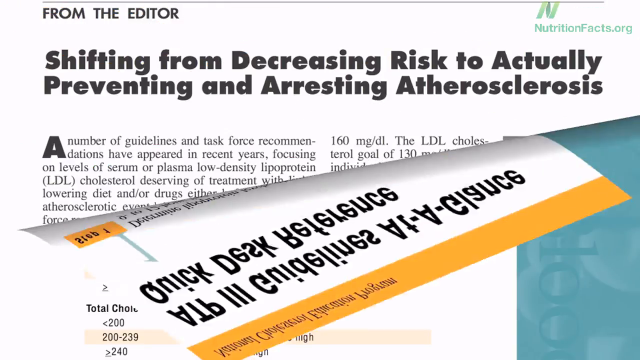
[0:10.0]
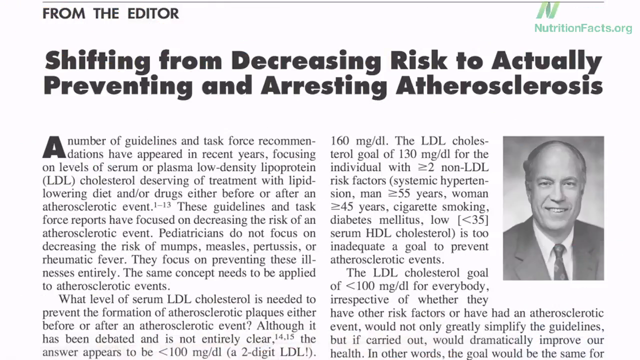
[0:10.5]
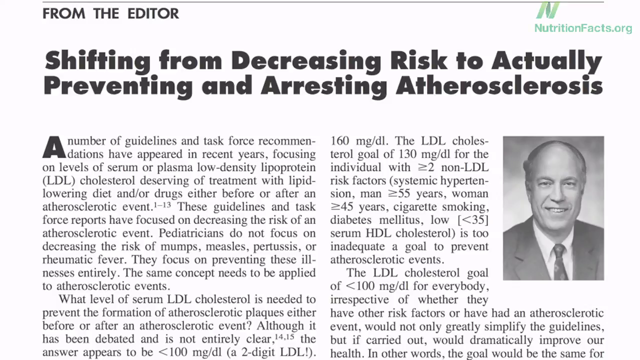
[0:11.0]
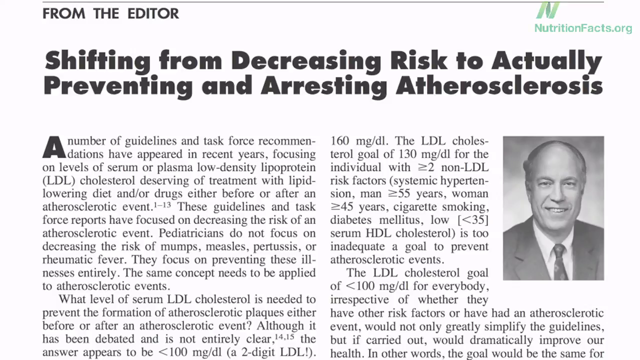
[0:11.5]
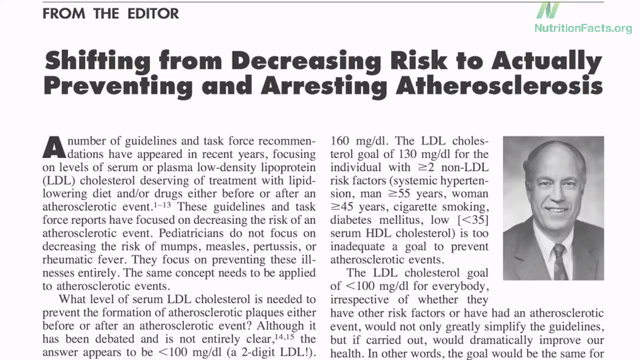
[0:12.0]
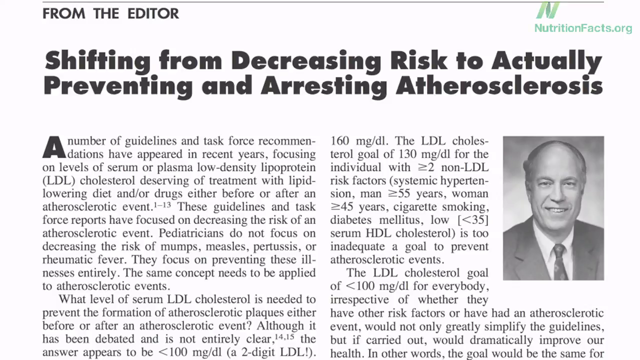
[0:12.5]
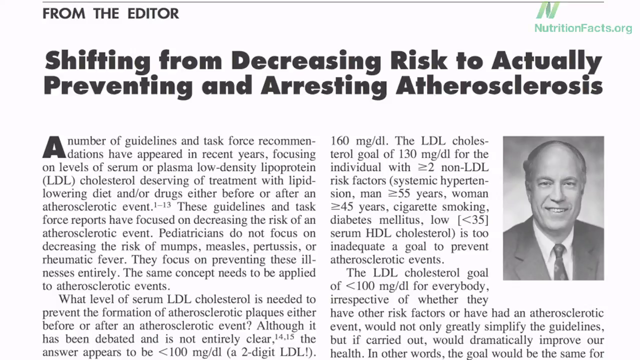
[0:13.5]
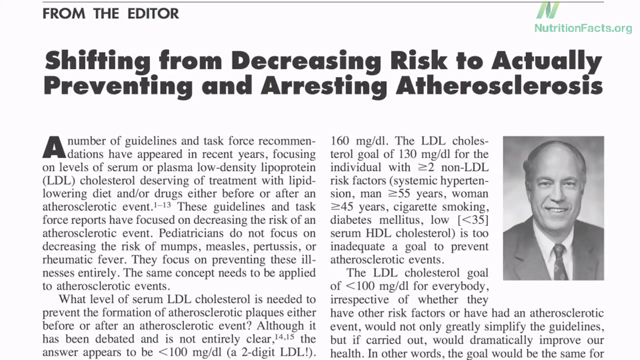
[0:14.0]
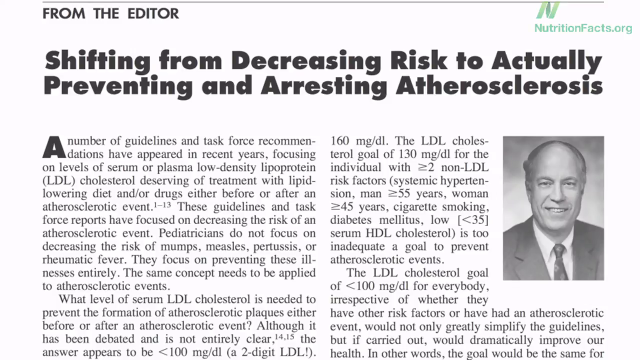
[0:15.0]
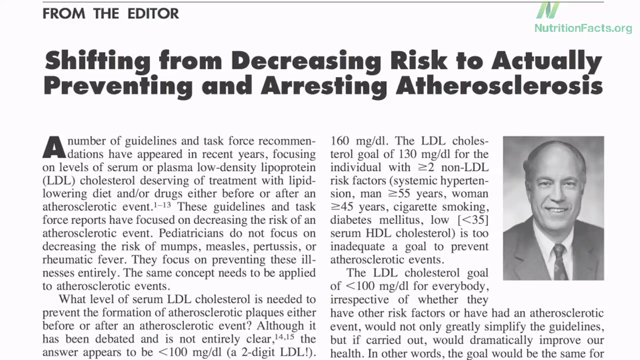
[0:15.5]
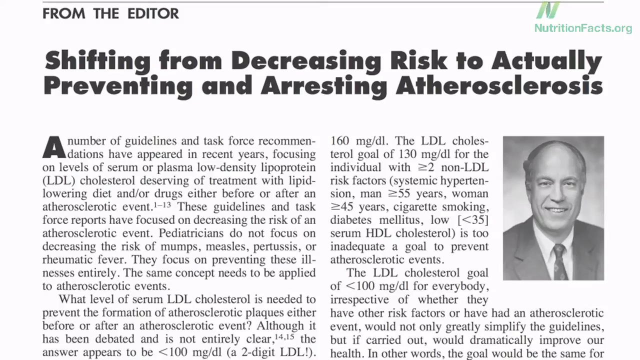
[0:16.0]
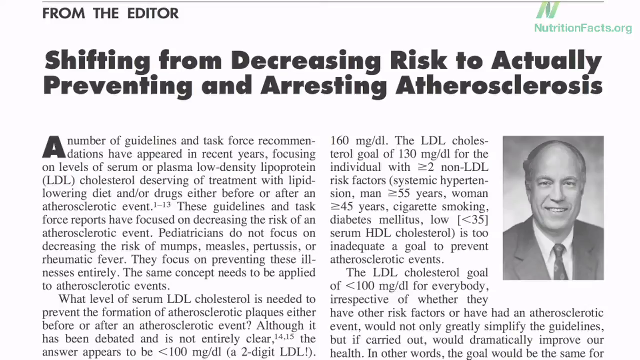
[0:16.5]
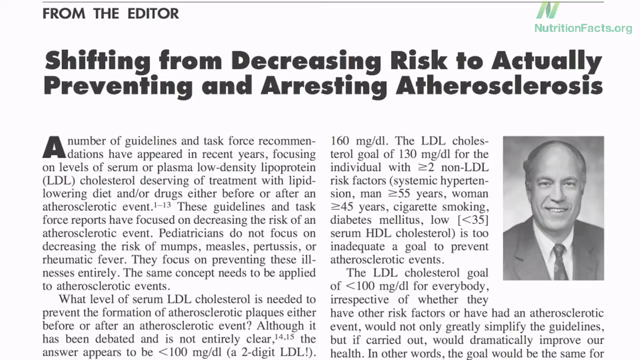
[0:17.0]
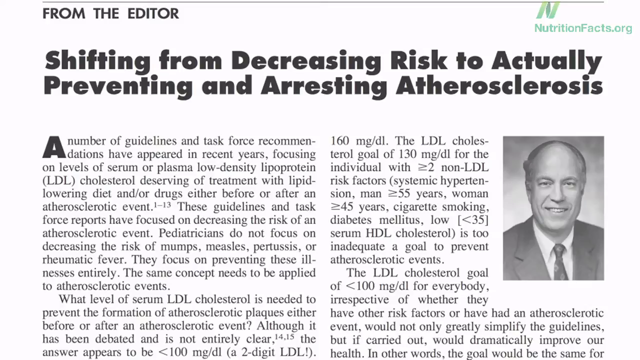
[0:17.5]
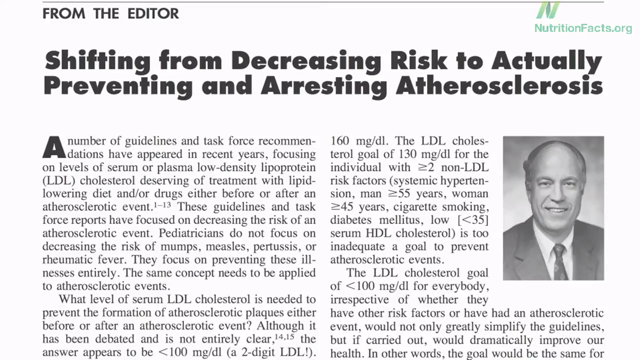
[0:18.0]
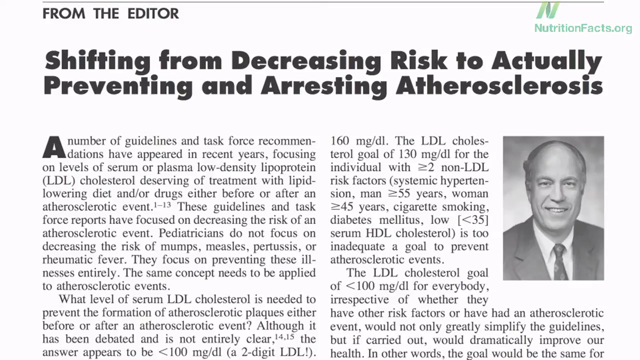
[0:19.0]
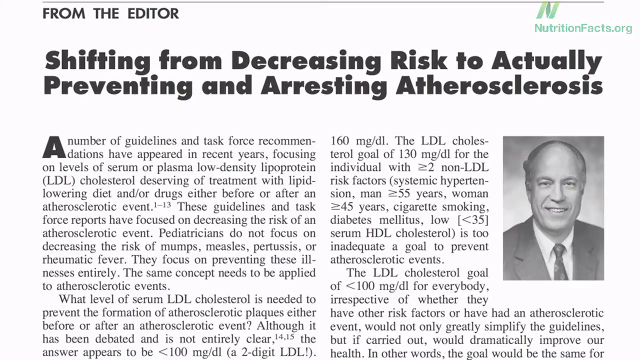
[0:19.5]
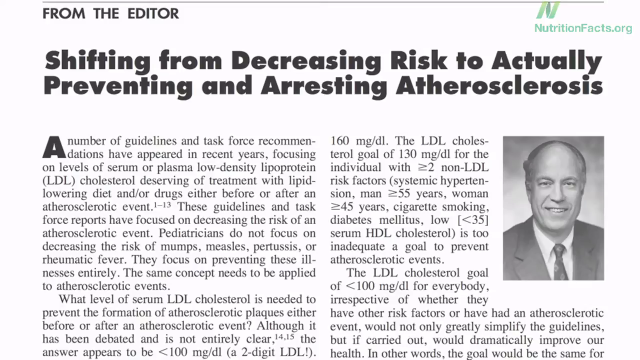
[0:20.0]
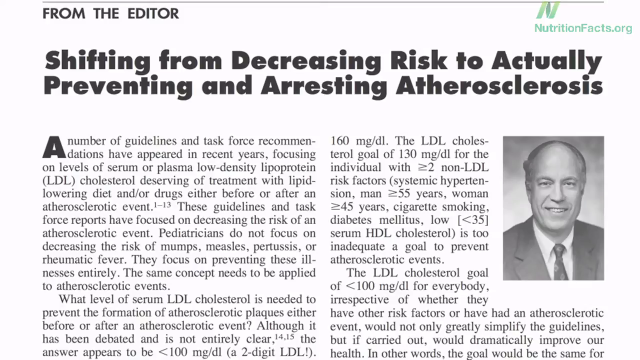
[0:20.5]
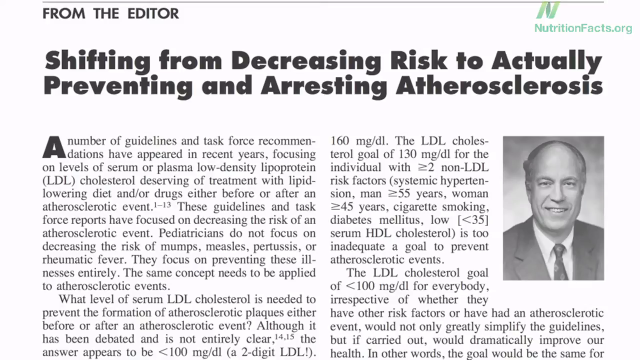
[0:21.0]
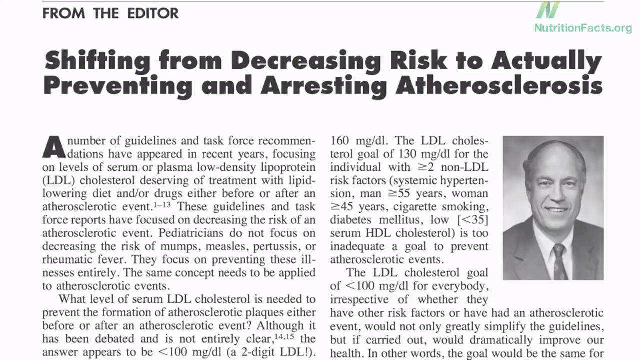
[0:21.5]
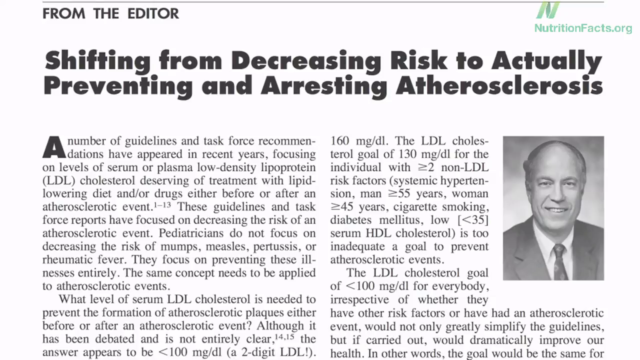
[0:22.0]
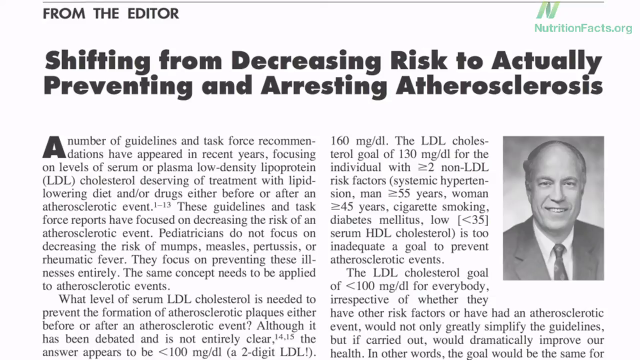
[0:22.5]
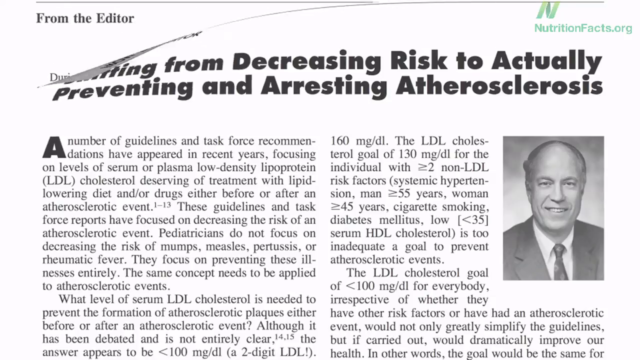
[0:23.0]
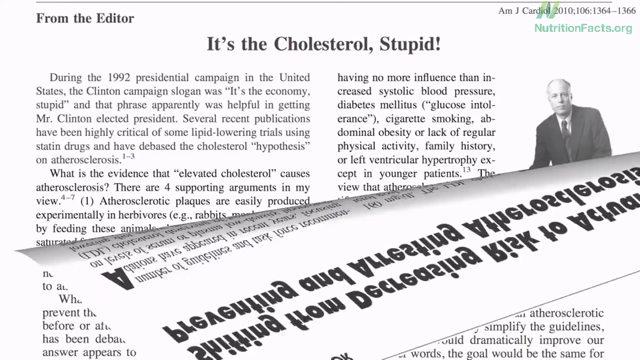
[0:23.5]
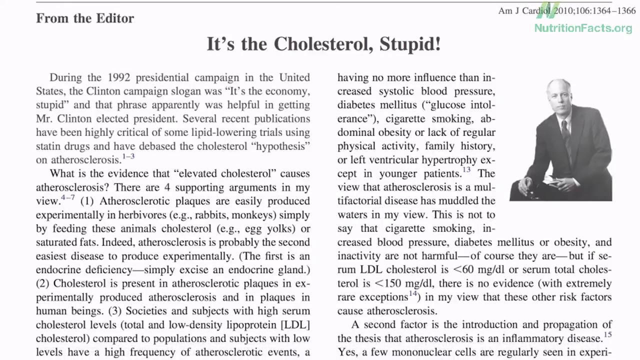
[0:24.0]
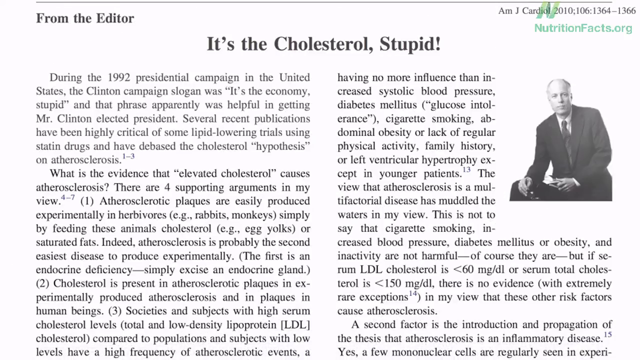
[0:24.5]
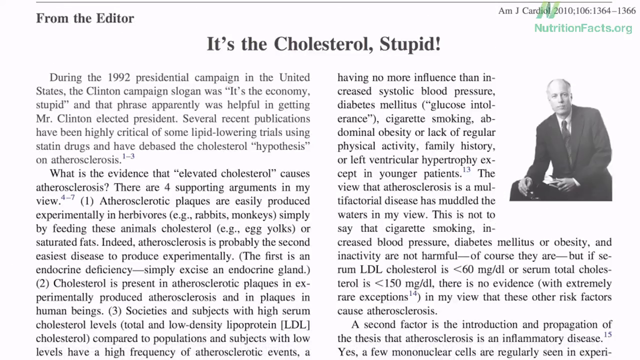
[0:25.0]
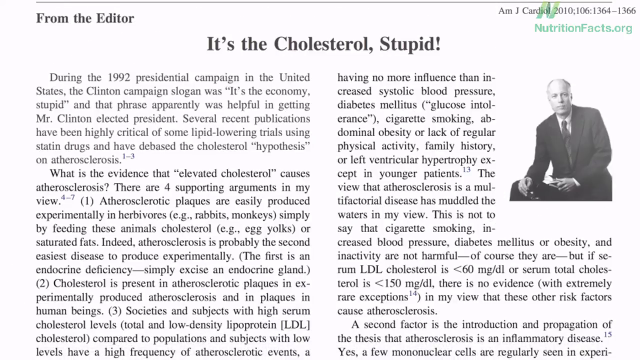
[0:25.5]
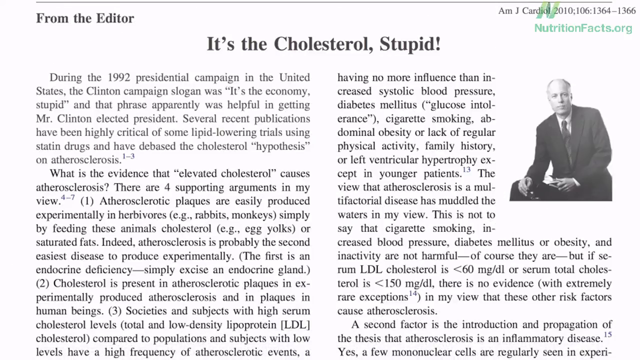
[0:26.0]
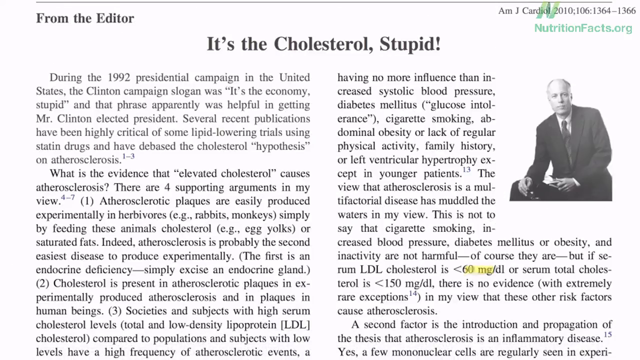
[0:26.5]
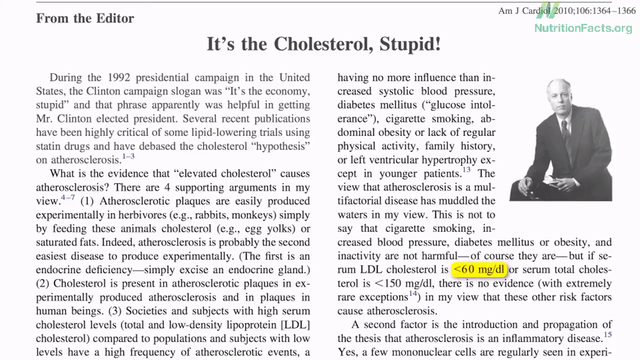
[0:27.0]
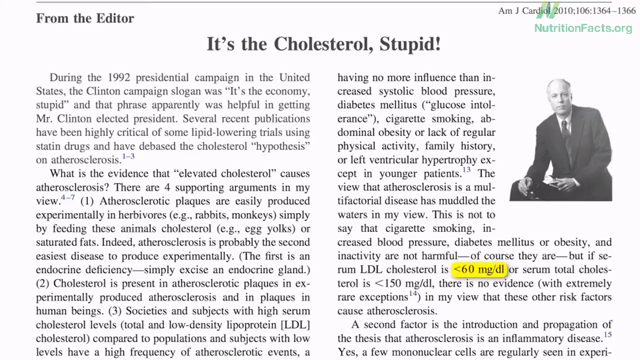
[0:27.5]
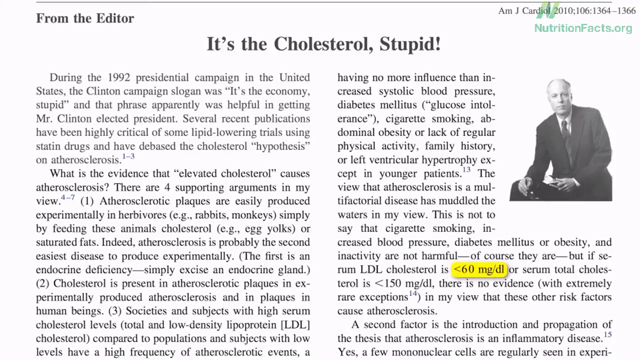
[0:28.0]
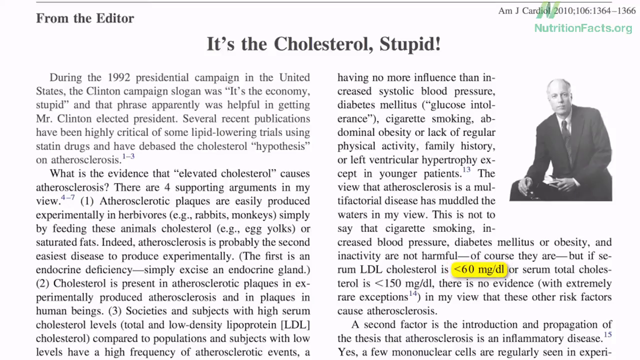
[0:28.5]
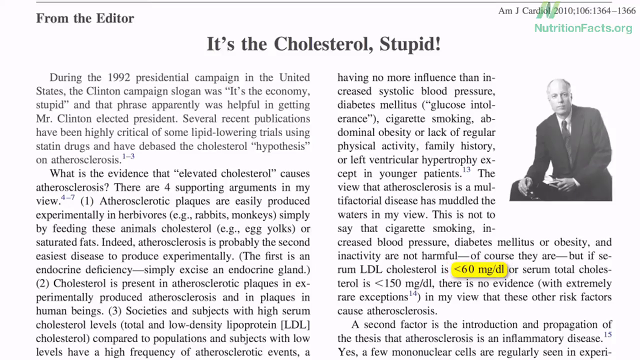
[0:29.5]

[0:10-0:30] The preceding At-A-Glance ATP-3 Guidelines slide peels away in a slide transition, revealing a nutritionfacts.org "from the editor" page. A gray bar at the top shows "from the editor" on the top left and Nutrition Facts with its logo on the top right. The page is titled "Shifting from Decreasing Risk to Actually Preventing and Arresting Atherosclerosis" and has a two-column block of text with references. A picture shows a man, presumably the editor: a white man, mostly bald and clean-shaven, in a suit, white shirt and overly tightly tied tie. The text covers the status of current guidelines and a sort of comparison to mumps and measles, where the aim is not to decrease risk but to prevent them entirely, drawing a parallel with cholesterol. Another "from the editor" slide follows, now showing not just a face photo but an upper-body shot of the editor leaning forward confidentially over a desk. The page title is "It's the Cholesterol Stupid," and it seems to involve a quote from the American Journal of Cardiology, 2010.